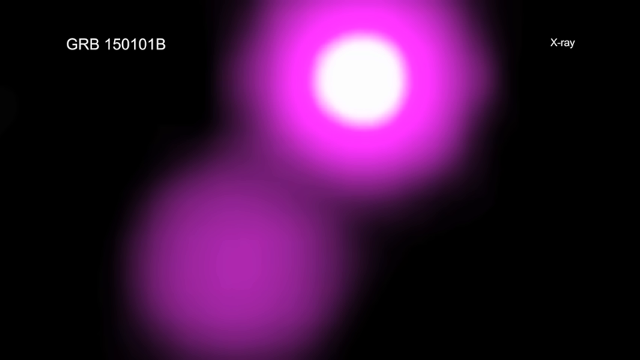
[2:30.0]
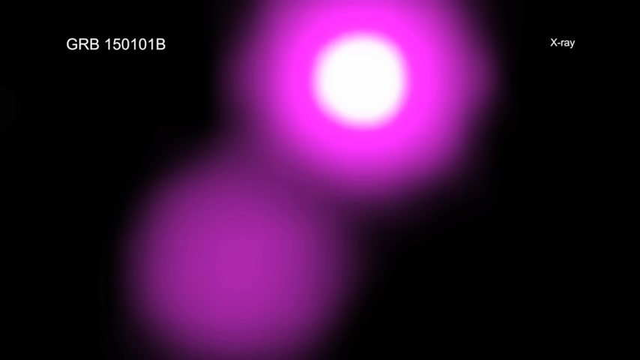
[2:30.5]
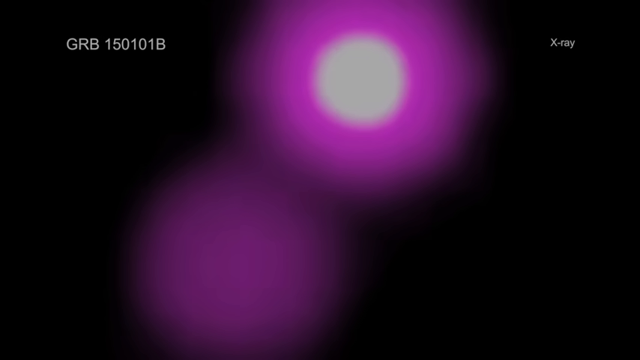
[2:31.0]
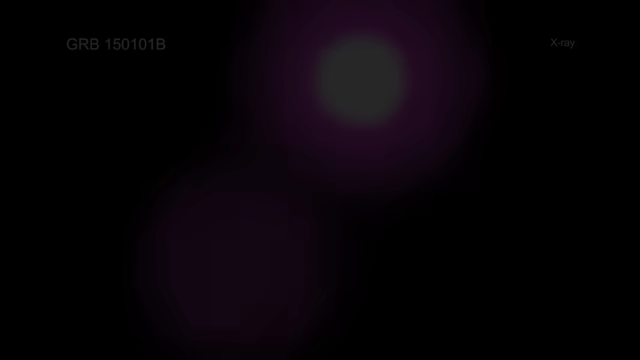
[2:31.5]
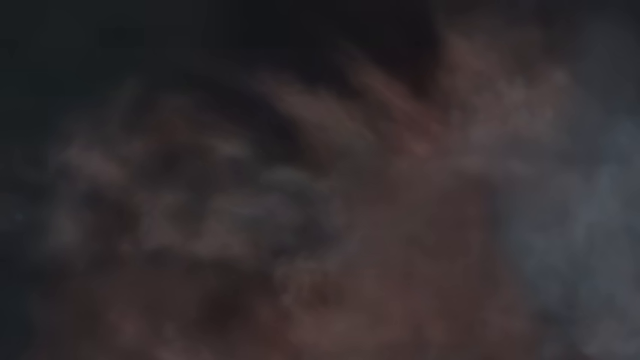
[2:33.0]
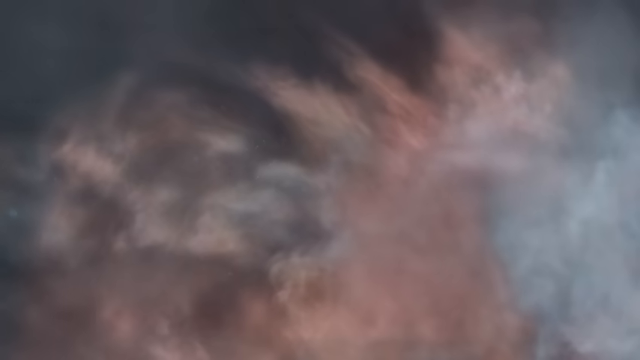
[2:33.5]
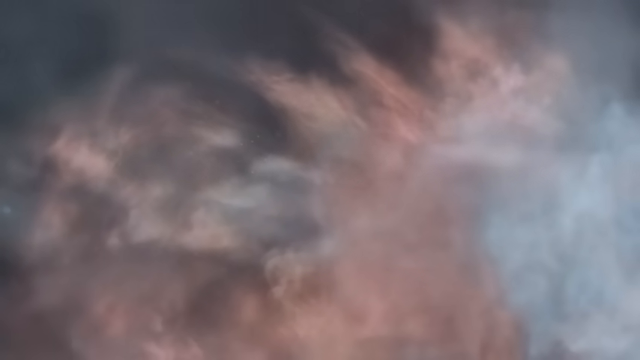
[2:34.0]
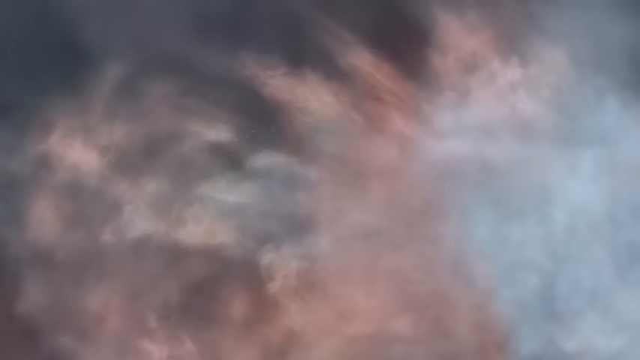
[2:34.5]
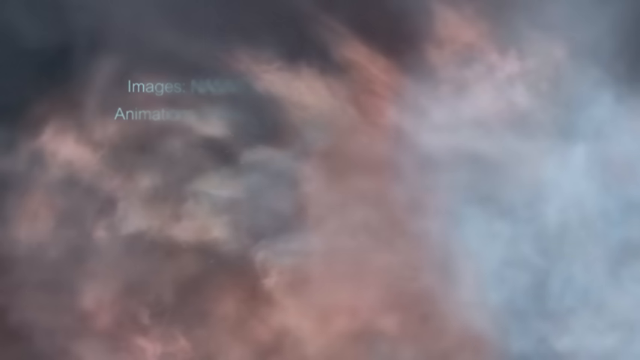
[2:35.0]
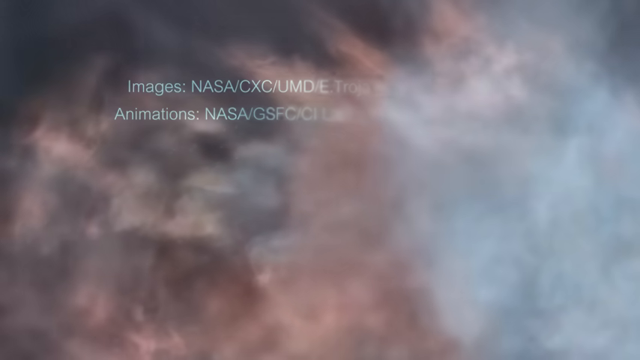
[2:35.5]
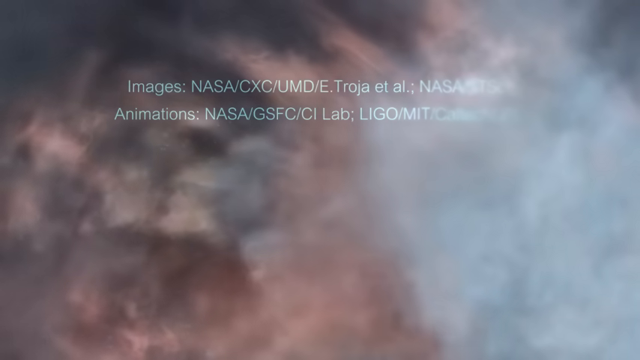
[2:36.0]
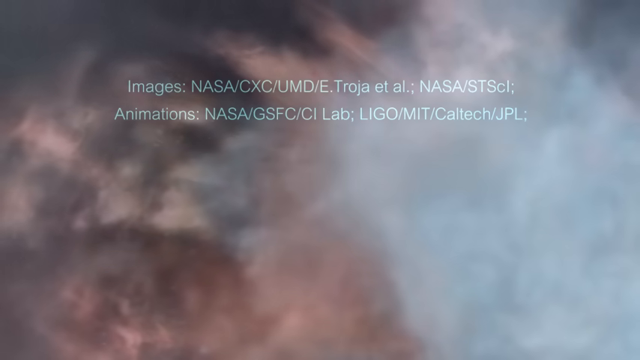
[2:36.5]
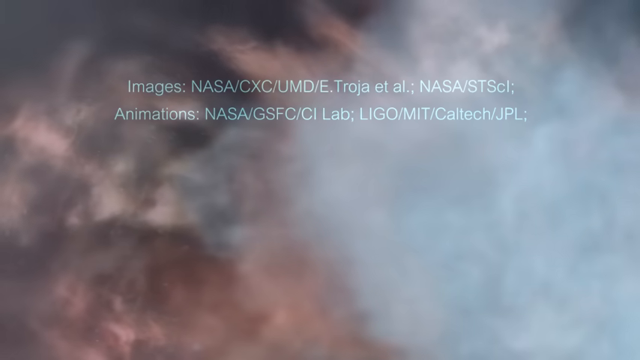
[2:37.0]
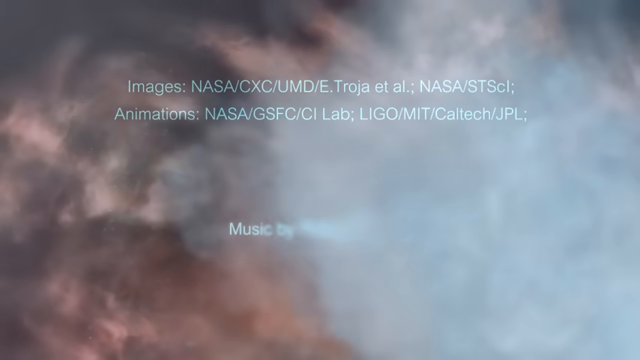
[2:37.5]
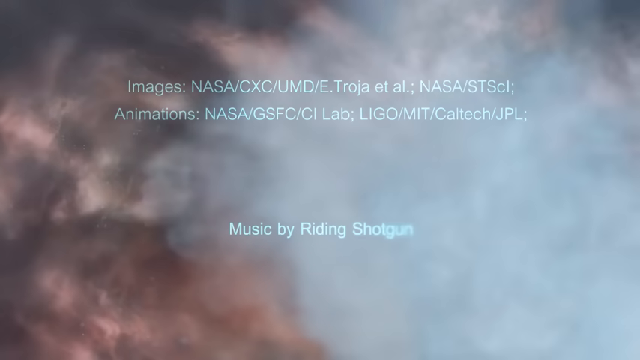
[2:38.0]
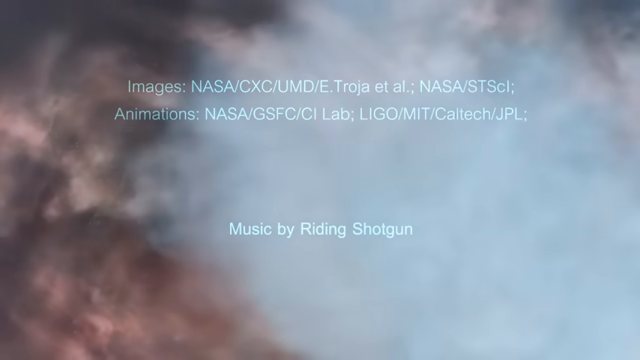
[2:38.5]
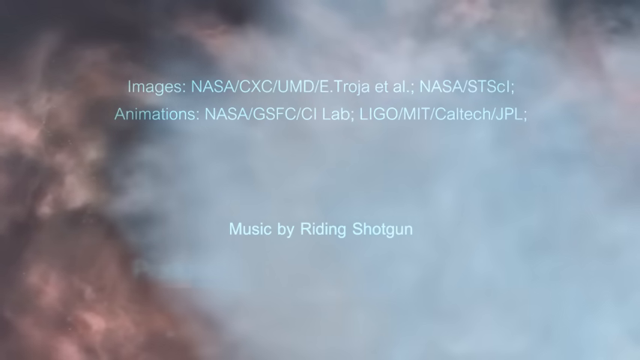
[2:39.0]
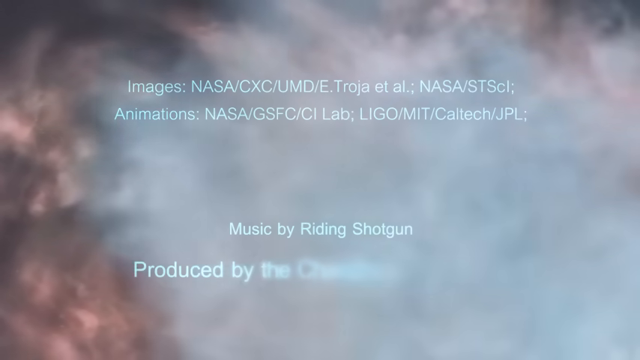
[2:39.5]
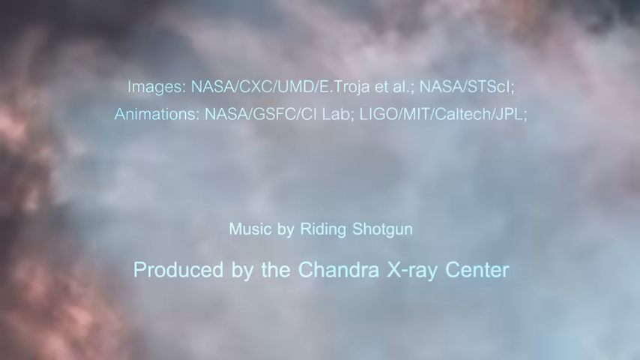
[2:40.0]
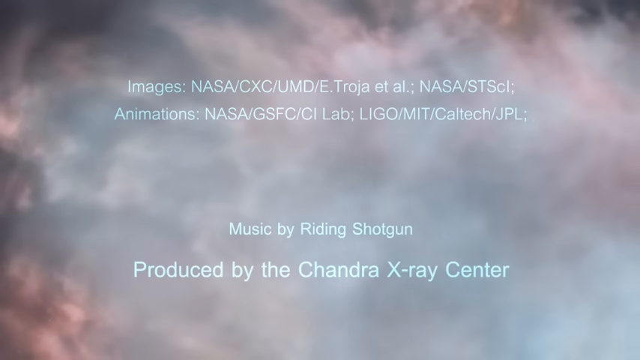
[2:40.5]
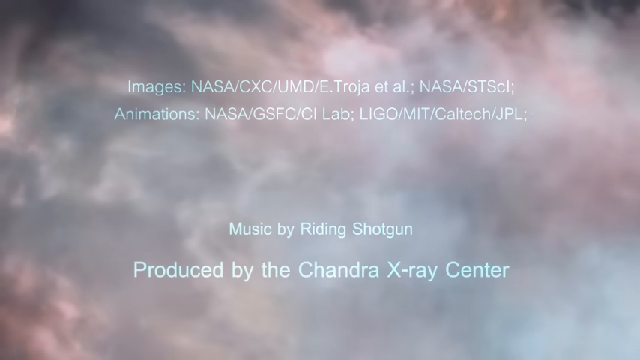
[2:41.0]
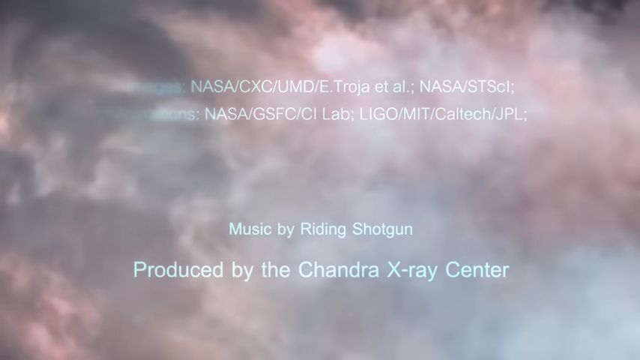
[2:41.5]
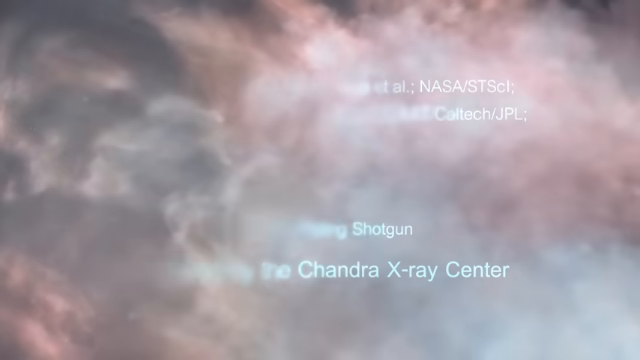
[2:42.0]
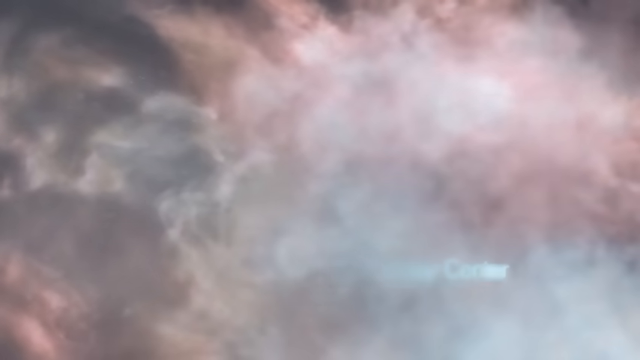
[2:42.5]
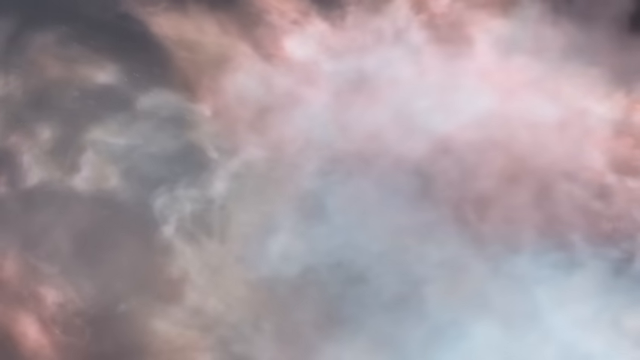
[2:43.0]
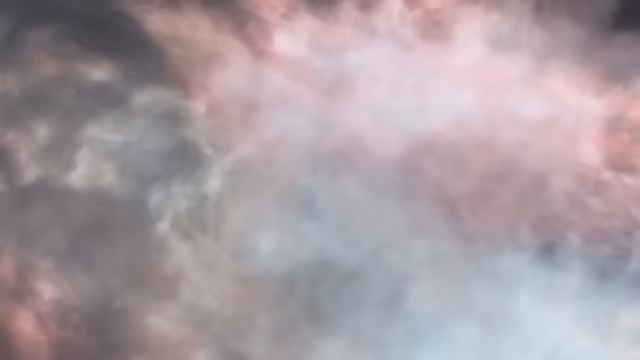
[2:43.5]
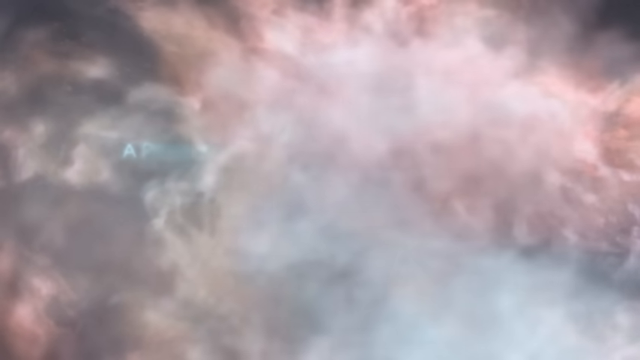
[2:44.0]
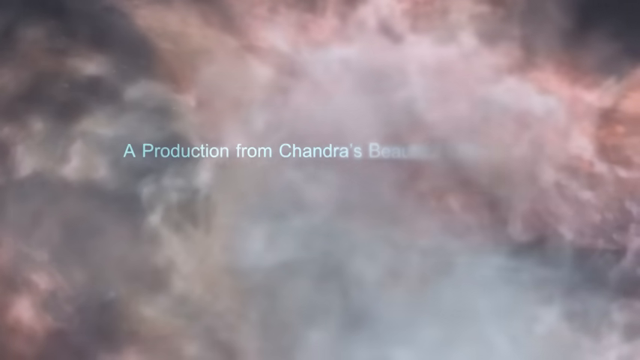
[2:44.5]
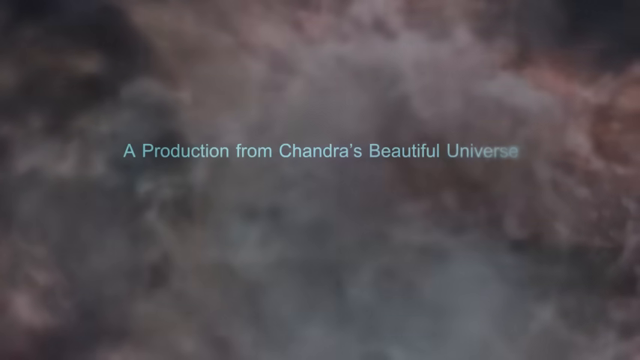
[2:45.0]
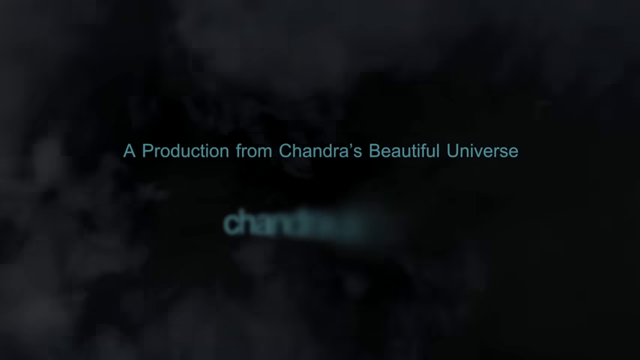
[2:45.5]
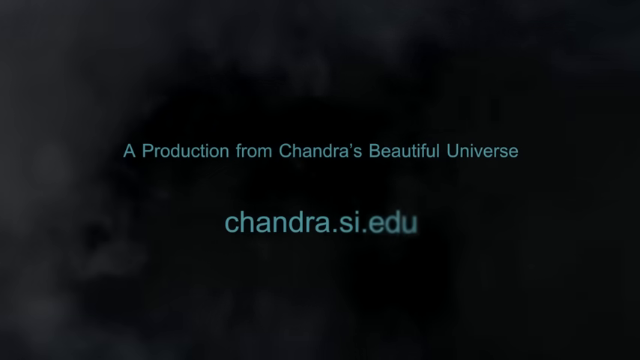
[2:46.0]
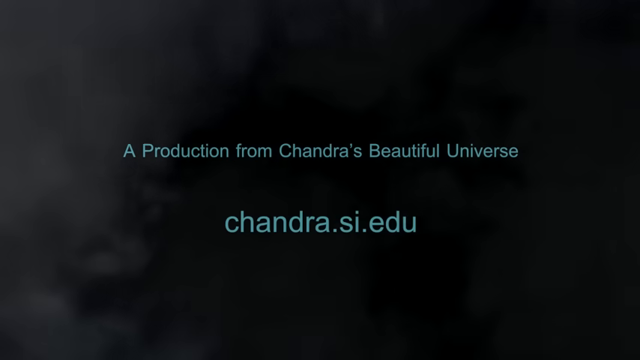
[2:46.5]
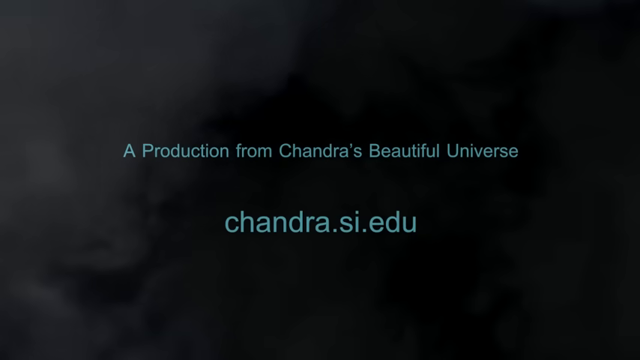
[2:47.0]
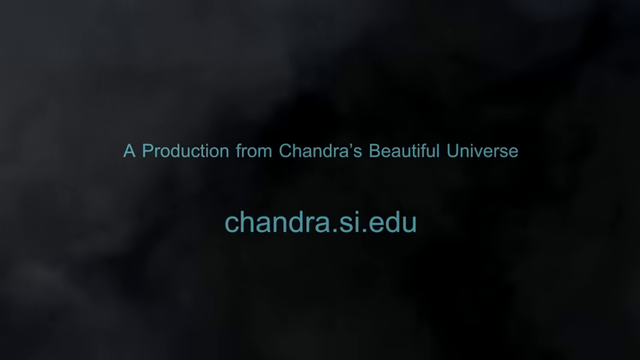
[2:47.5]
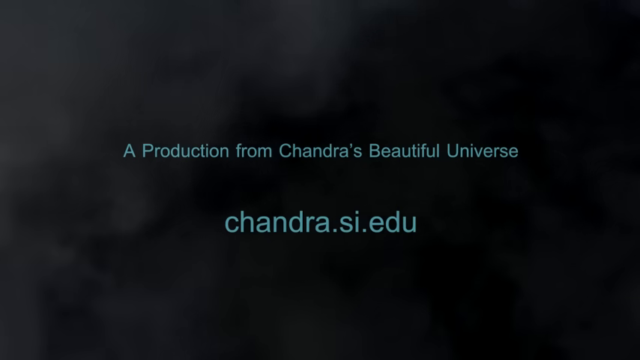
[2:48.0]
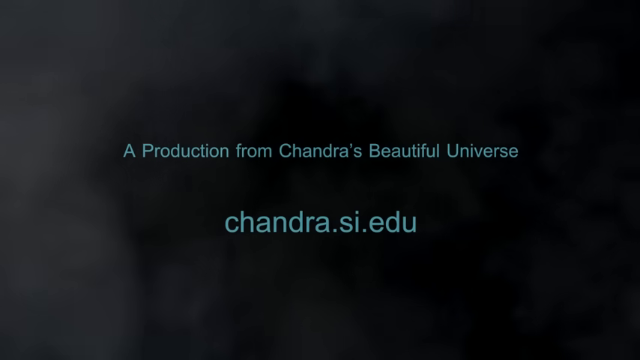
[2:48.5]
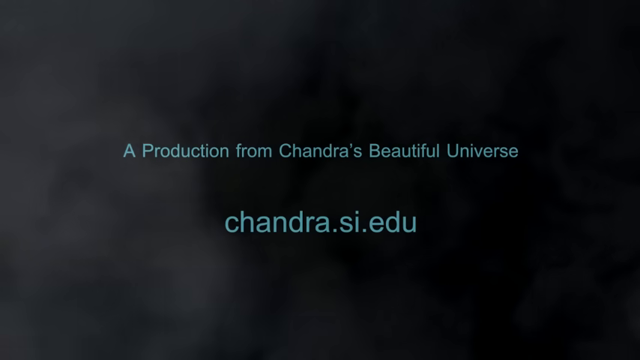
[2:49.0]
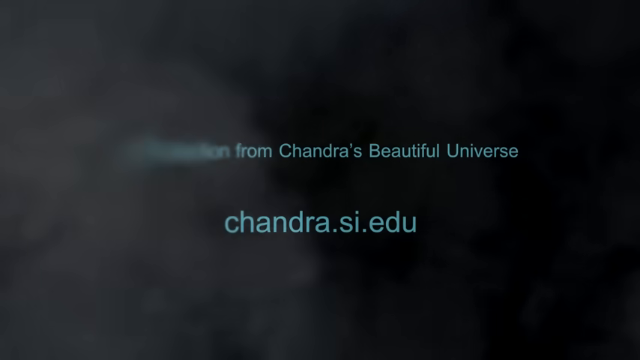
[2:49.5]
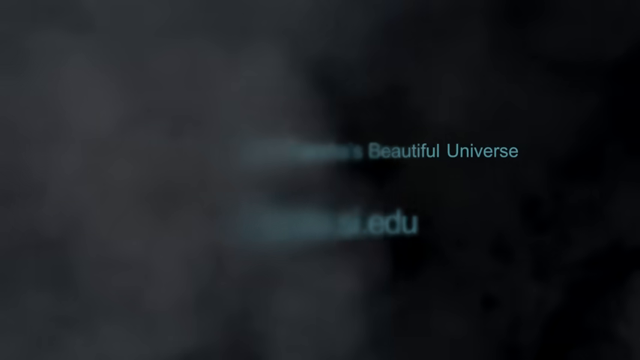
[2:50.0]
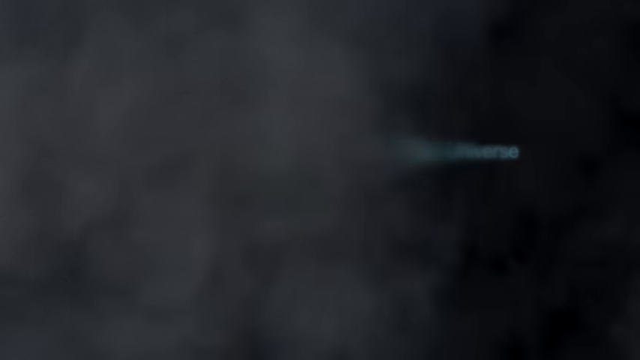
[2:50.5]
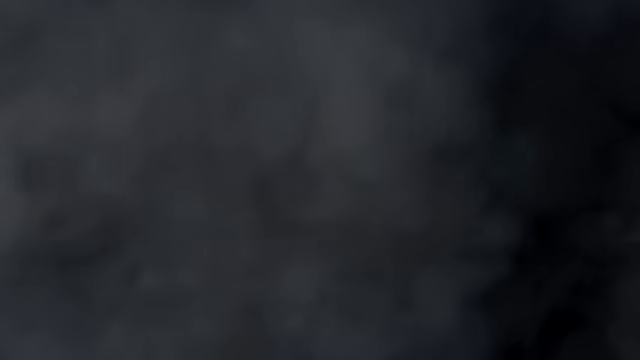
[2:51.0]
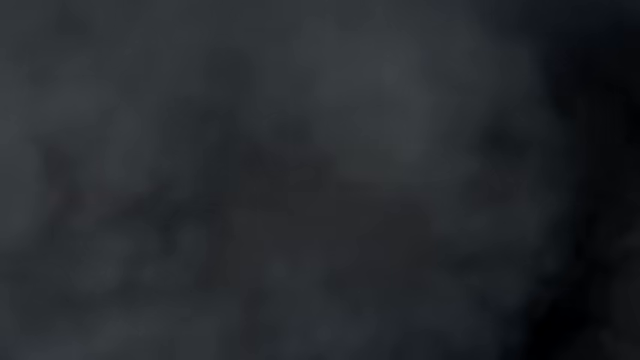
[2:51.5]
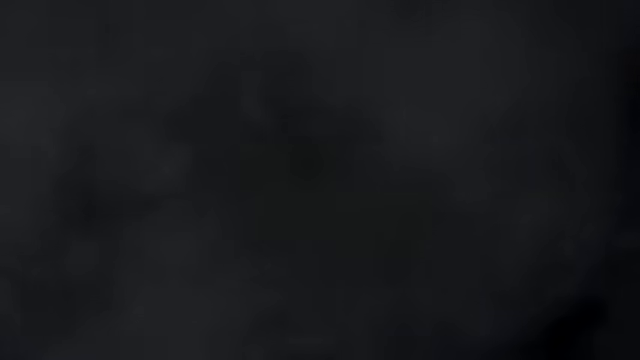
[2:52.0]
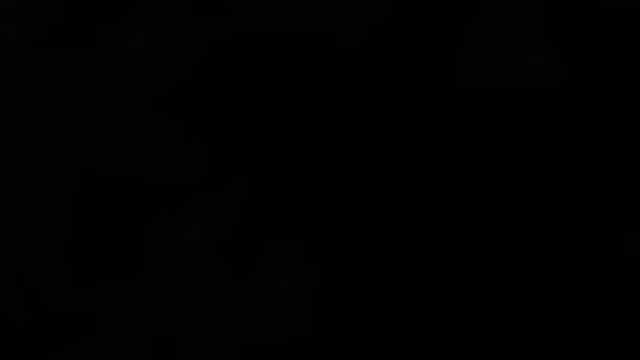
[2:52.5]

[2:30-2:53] A pink and white sphere of energy is shown close up. The scene transitions to outro credits with text citations for the images, animations and music: the images are from NASA CXC-UMD, the music is by Riding Shotgun, and the video was produced by the Chandra X-Ray Center. The same credits are given for the animations, with one or two added companies, and a website, chandra.si.edu, is given. Most of the credits appear over a background of a mainly white and pink solar cloud. At the very end, the video transitions into a smoke-like background and fades to black.